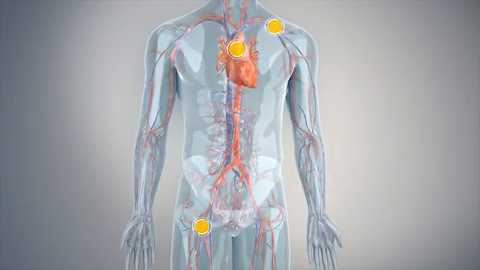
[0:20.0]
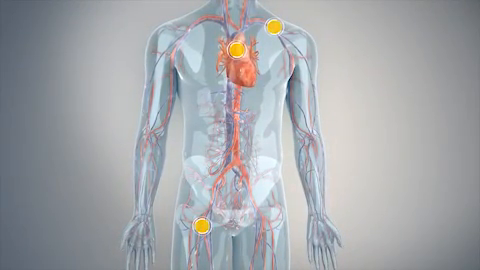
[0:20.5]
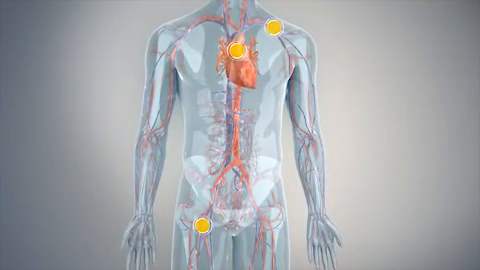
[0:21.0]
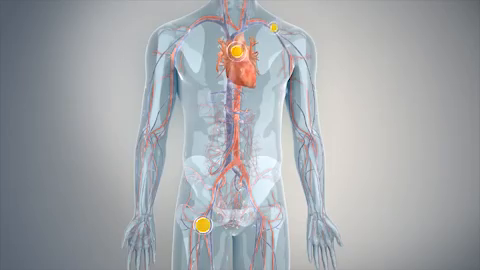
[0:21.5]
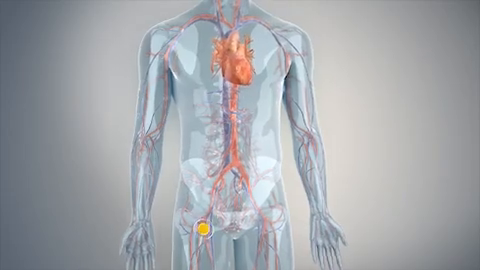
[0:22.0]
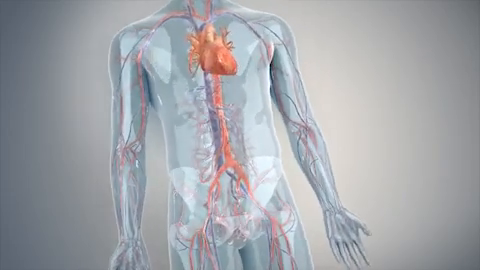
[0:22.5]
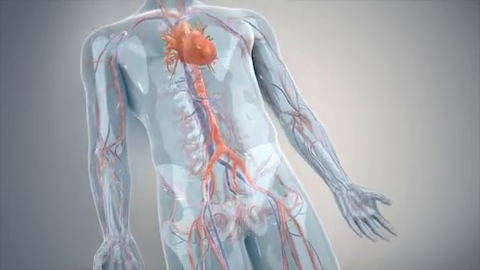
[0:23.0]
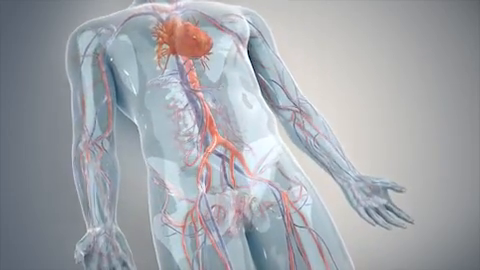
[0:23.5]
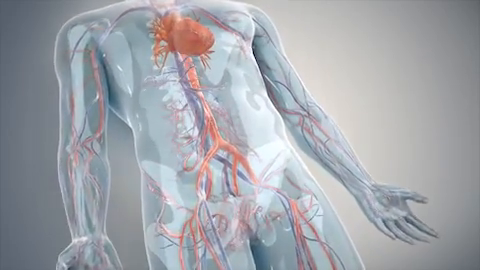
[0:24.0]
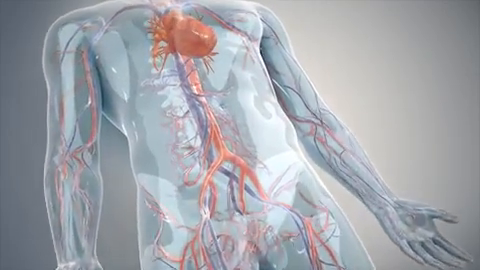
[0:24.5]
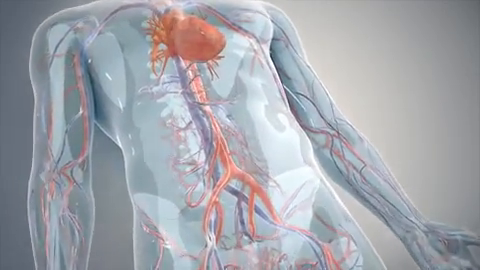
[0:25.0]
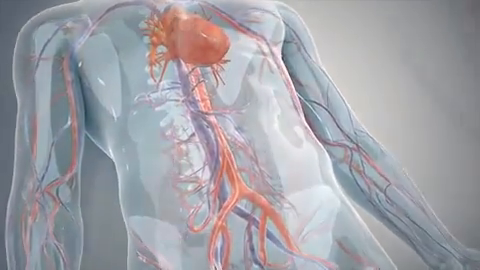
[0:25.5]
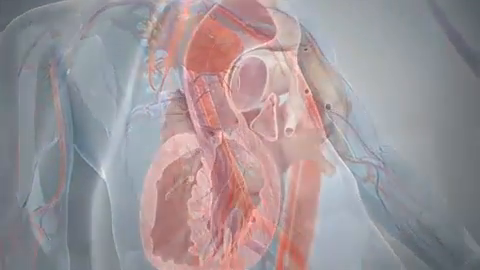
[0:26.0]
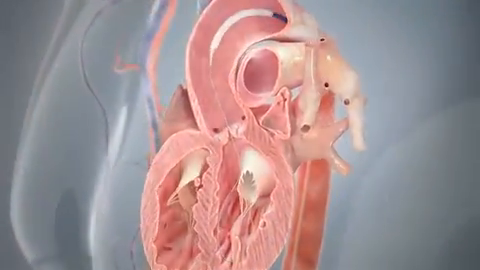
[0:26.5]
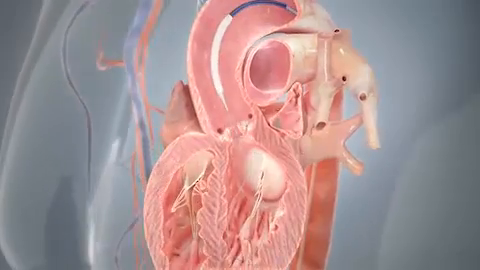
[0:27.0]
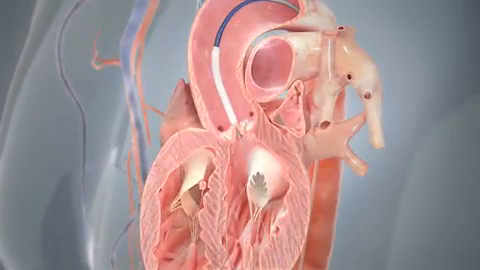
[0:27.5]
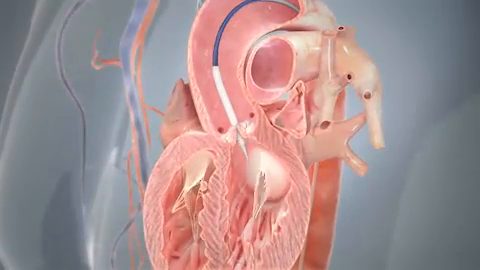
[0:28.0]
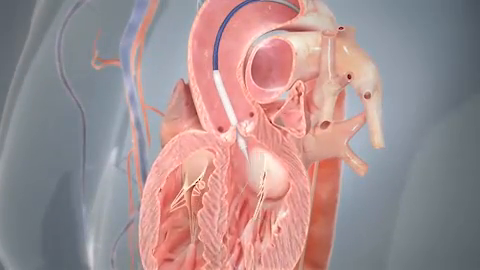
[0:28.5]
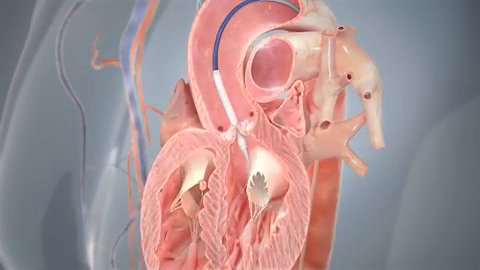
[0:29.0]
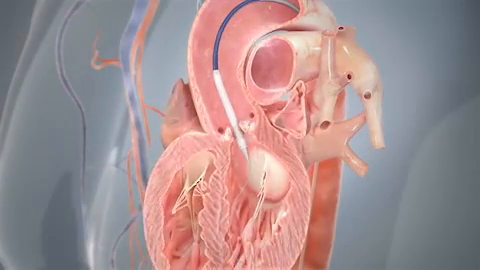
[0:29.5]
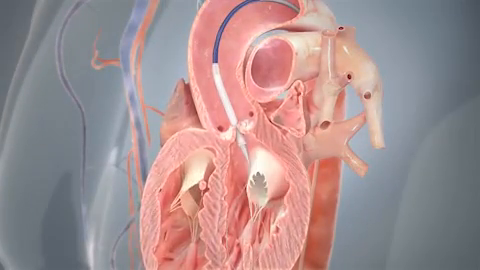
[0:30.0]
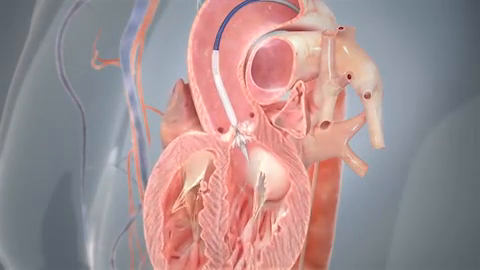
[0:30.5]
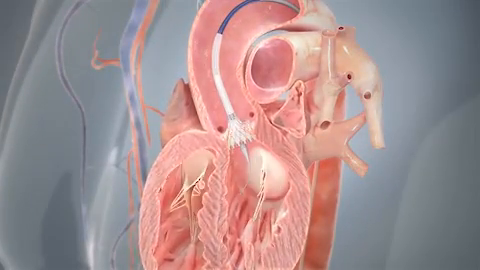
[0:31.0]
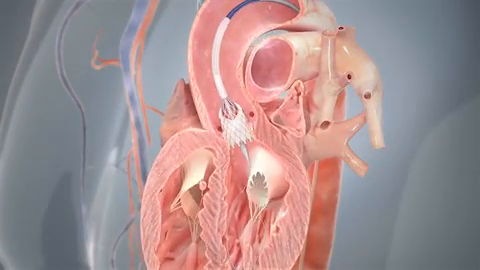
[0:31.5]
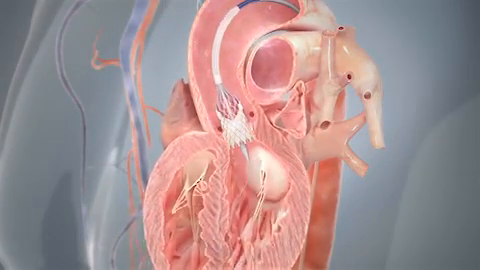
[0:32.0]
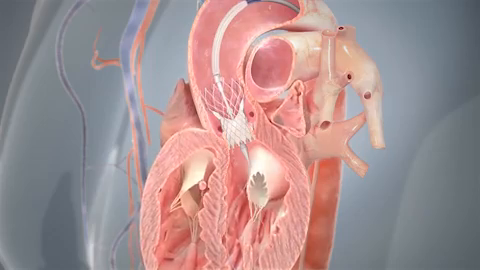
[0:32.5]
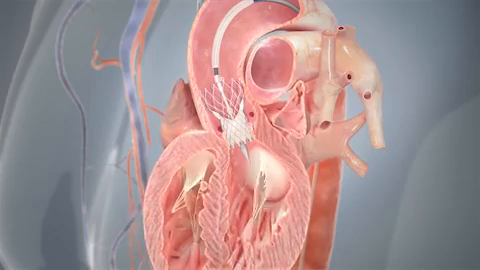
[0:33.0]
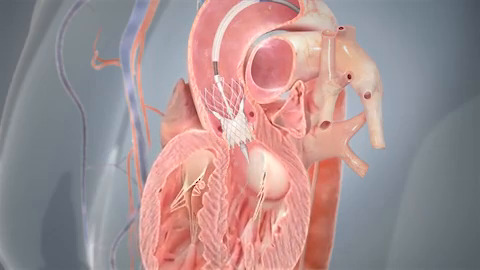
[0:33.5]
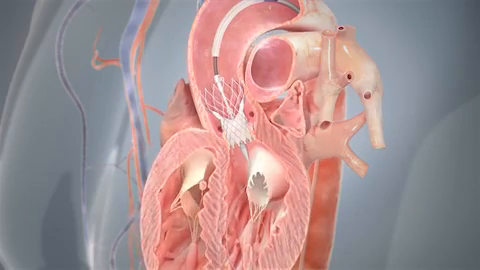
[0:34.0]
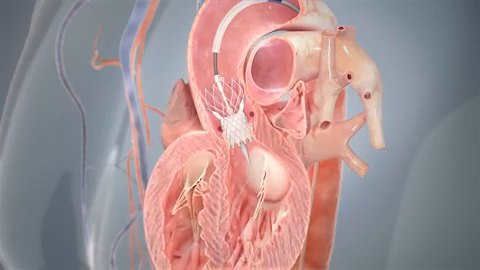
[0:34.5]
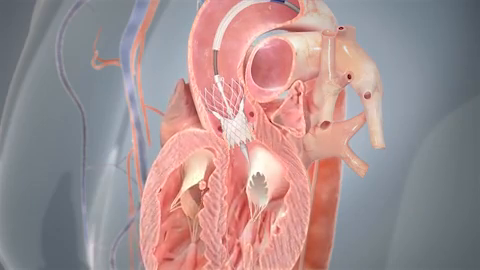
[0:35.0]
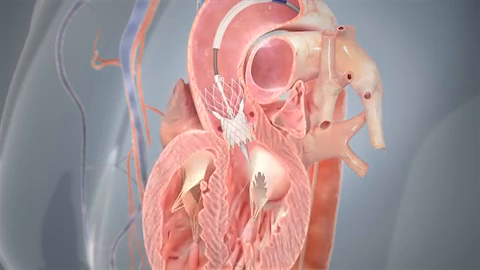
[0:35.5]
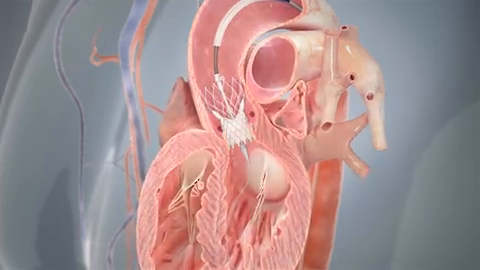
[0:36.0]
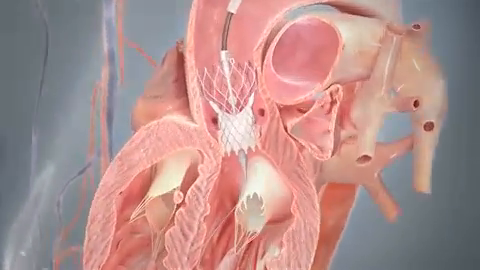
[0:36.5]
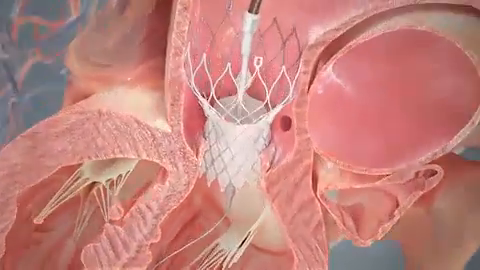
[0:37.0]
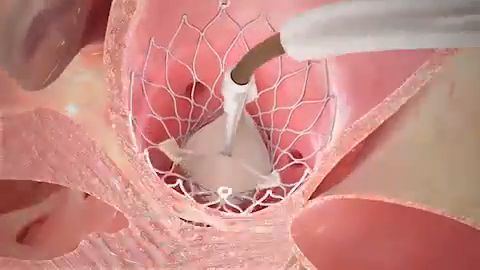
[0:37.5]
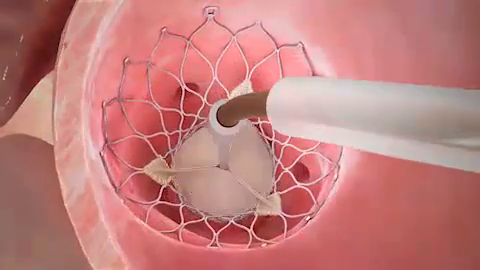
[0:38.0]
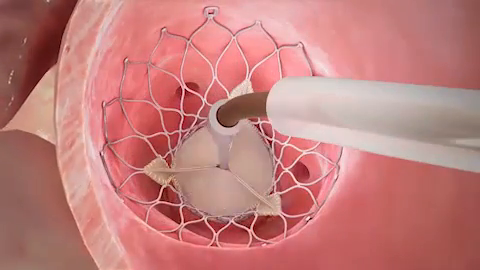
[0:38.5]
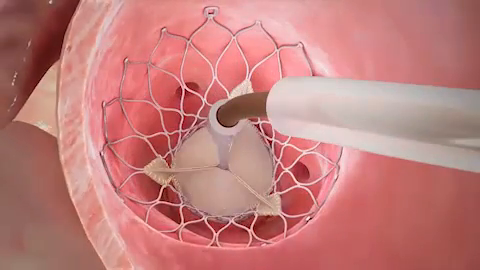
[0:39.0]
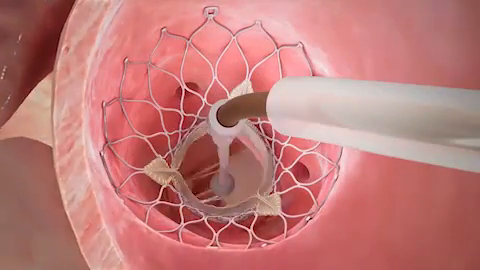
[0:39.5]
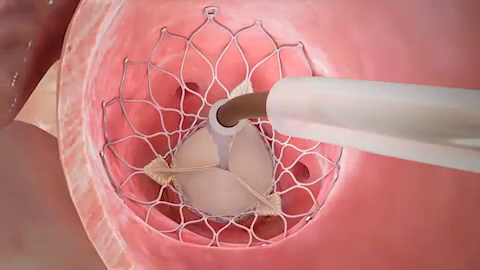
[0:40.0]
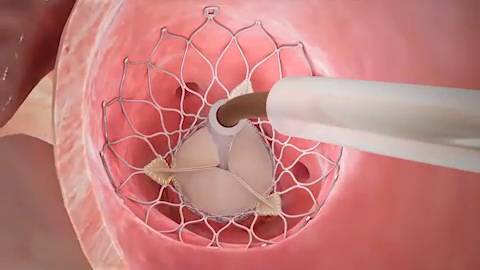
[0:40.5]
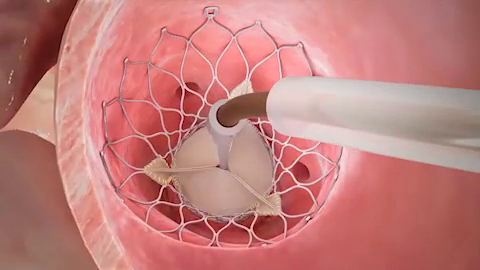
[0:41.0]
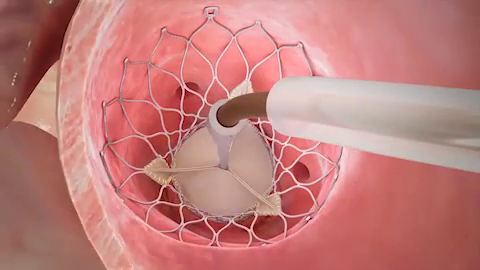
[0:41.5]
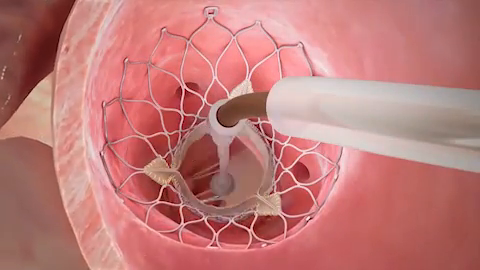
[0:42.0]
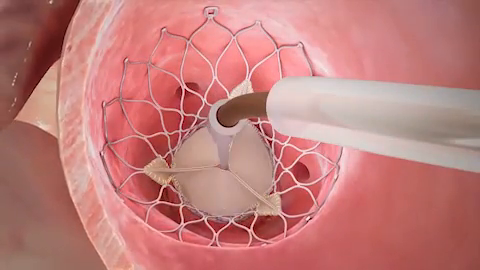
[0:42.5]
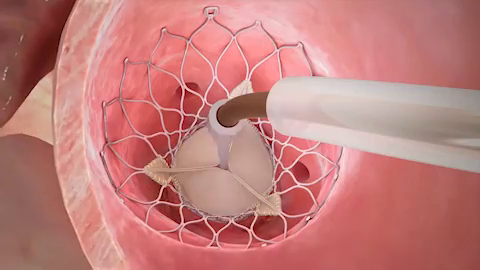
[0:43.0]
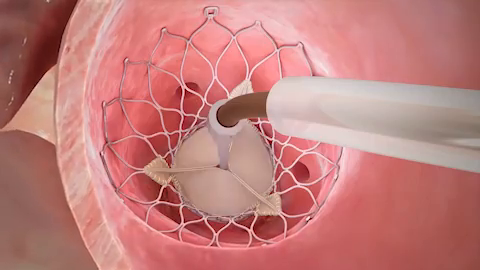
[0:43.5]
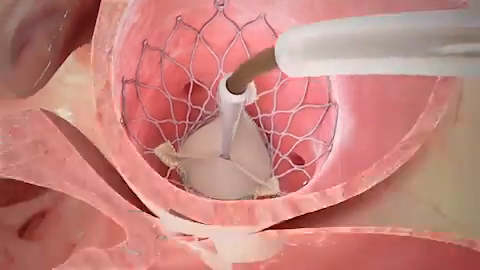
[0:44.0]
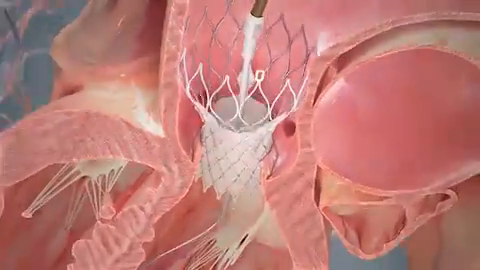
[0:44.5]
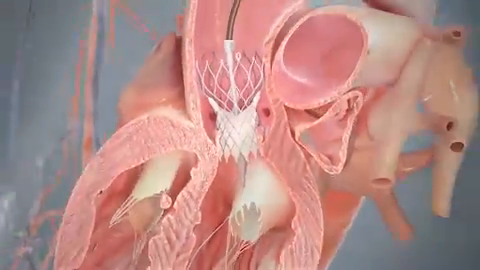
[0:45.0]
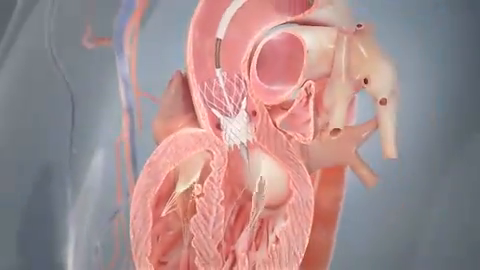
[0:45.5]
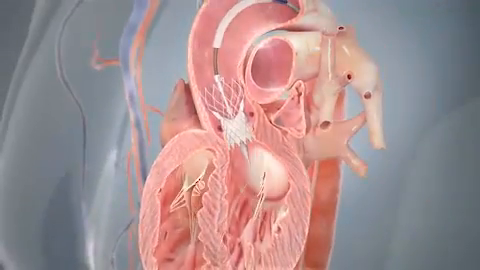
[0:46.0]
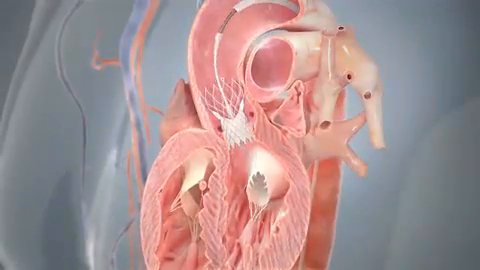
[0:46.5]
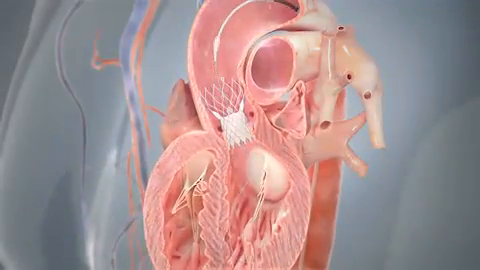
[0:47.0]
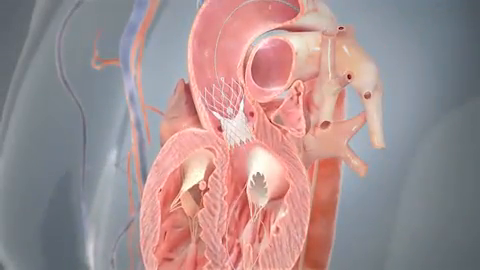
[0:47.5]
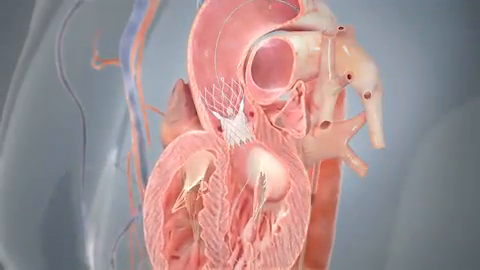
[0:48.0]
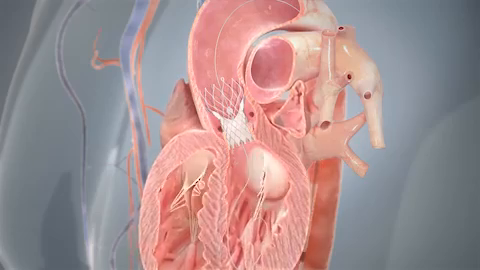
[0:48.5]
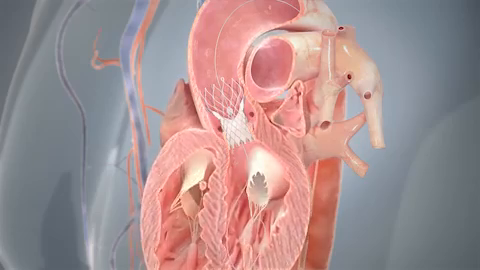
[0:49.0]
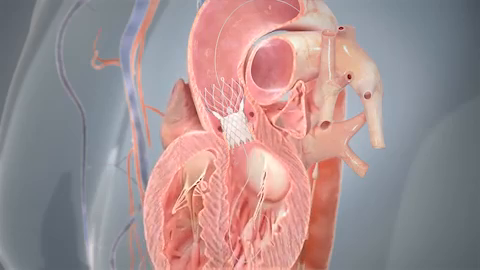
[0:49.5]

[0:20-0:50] A digitally produced body, not an actual human body, shows the heart on the inside. The view goes into the heart area, where a device has been put in; it is metallic and kind of like a basketball hoop, and it holds open a valve area in the heart. The body almost looks mostly gray, the heart is red, and some veins are blue while others are red. Three yellow circles are on the body: one is kind of in the upper arm and shoulder area, one is directly on the heart, and one is down kind of near the lower part of the pelvis, maybe in the groin area. These possibly mark where the tool goes in.